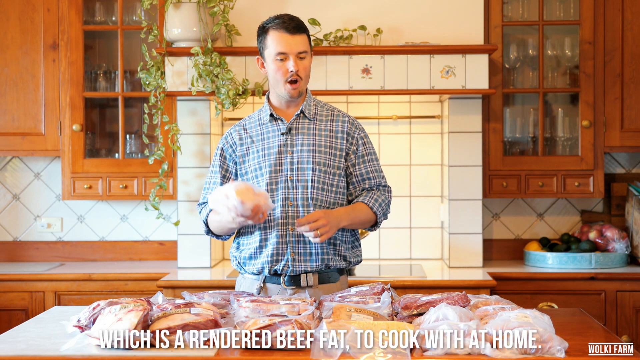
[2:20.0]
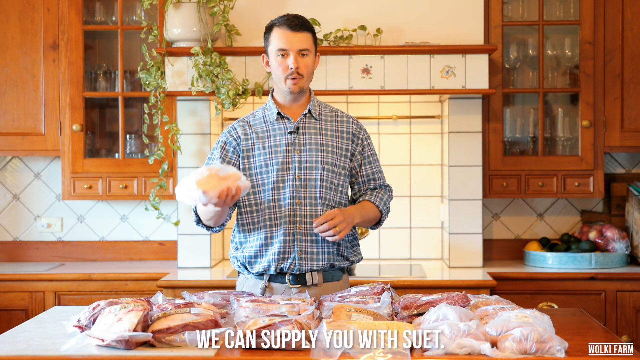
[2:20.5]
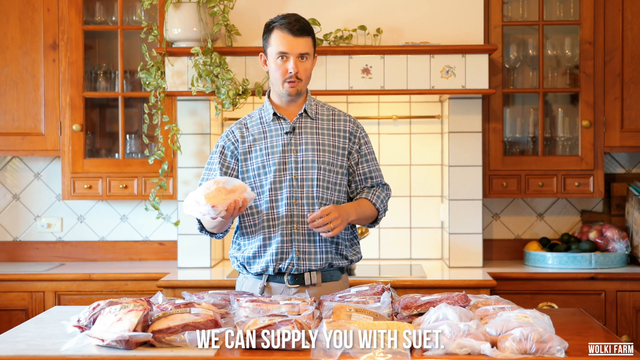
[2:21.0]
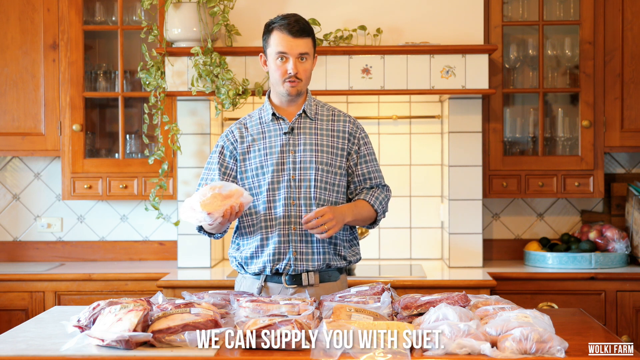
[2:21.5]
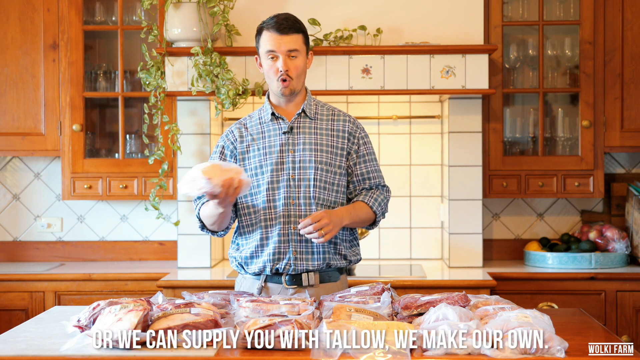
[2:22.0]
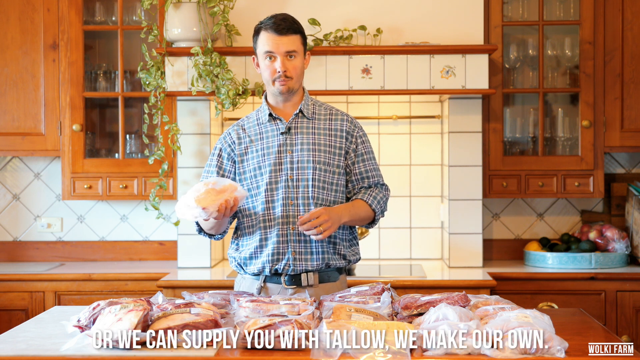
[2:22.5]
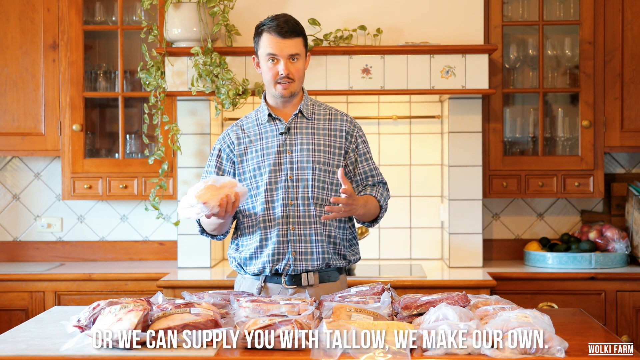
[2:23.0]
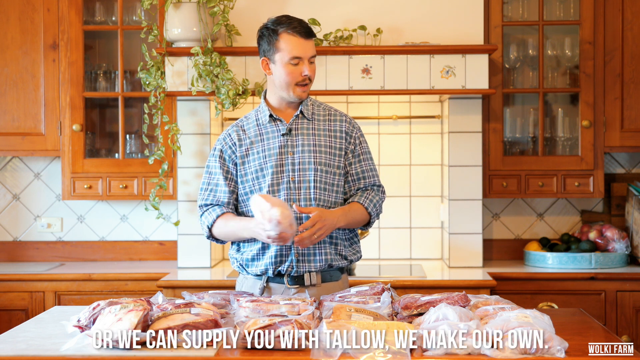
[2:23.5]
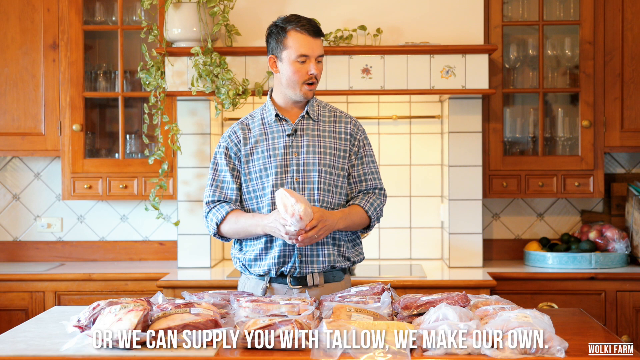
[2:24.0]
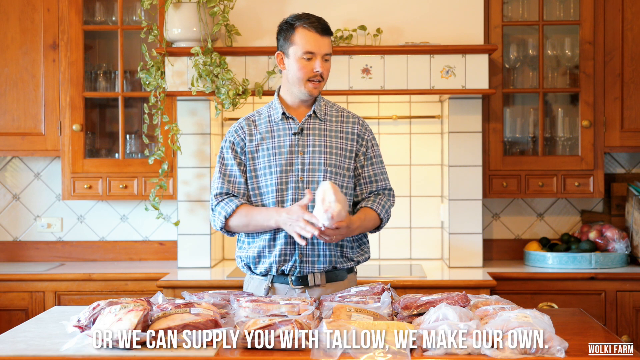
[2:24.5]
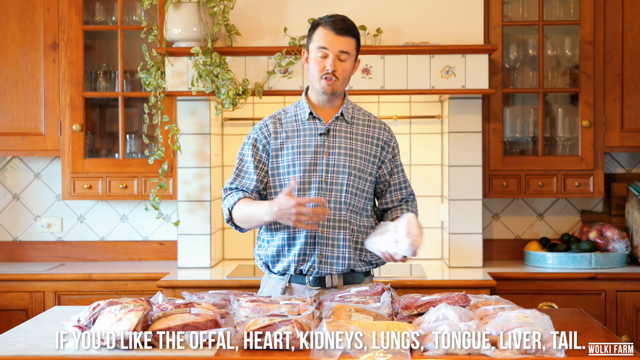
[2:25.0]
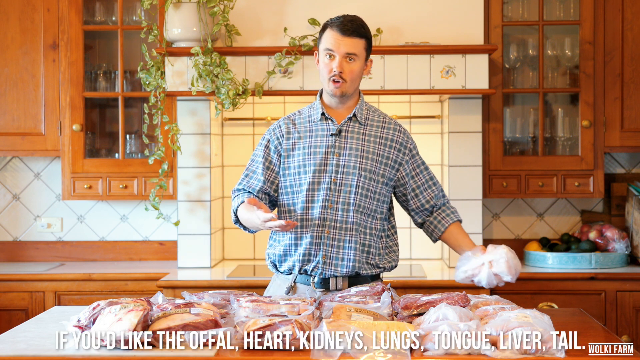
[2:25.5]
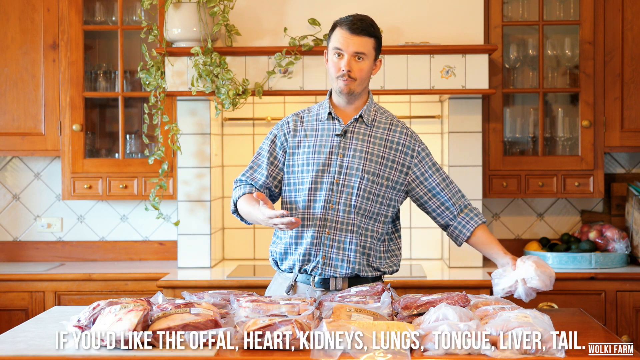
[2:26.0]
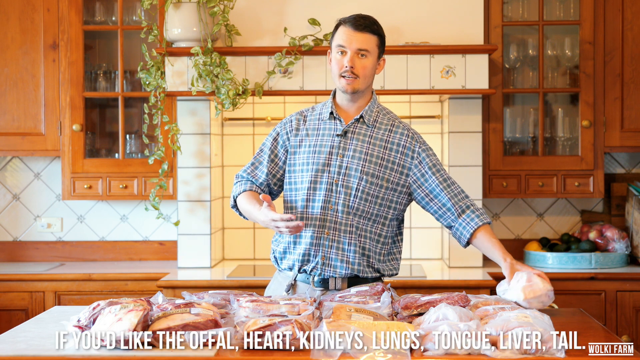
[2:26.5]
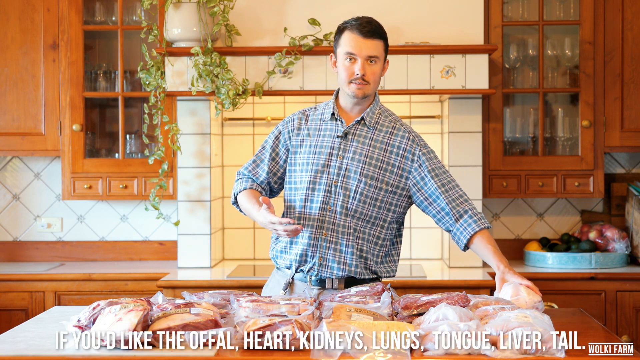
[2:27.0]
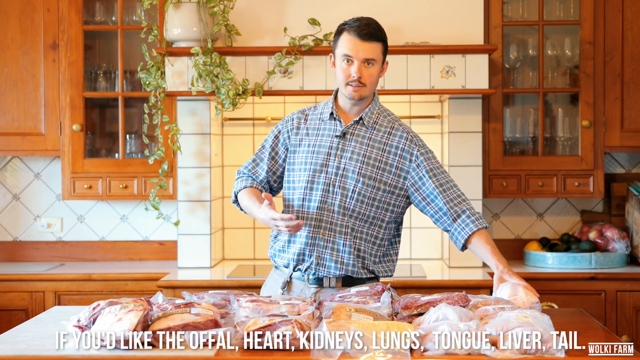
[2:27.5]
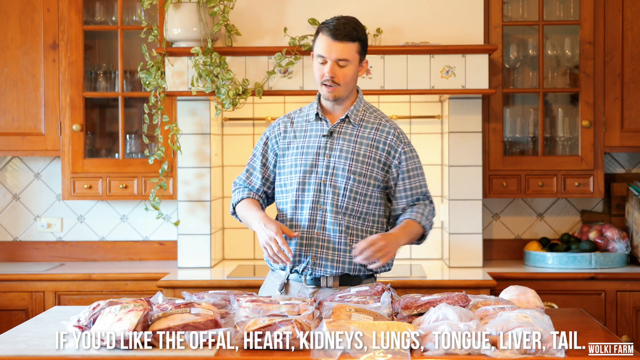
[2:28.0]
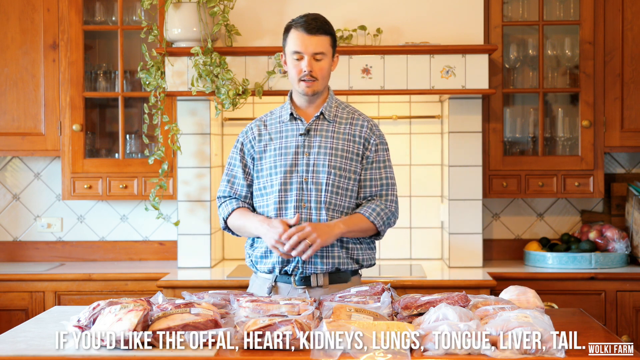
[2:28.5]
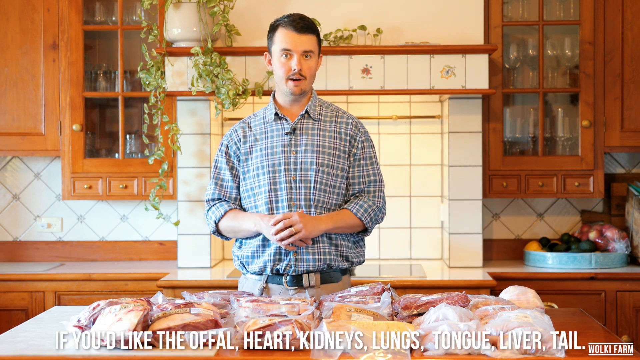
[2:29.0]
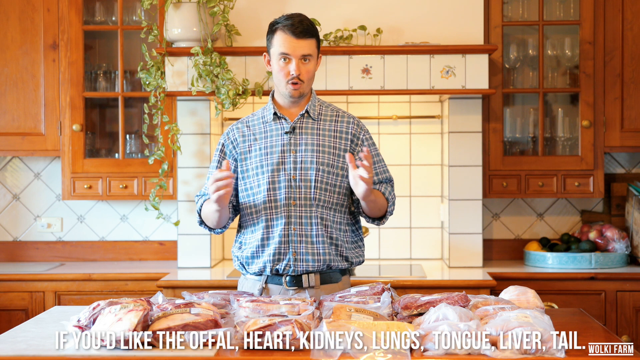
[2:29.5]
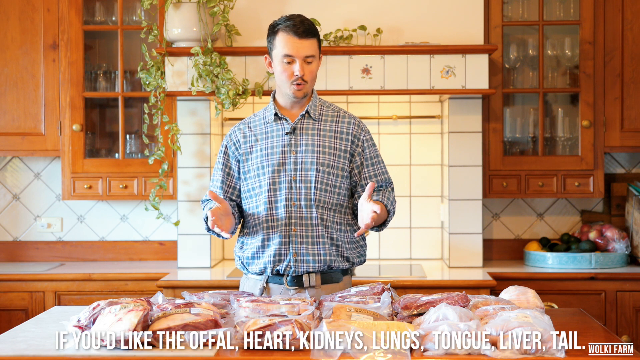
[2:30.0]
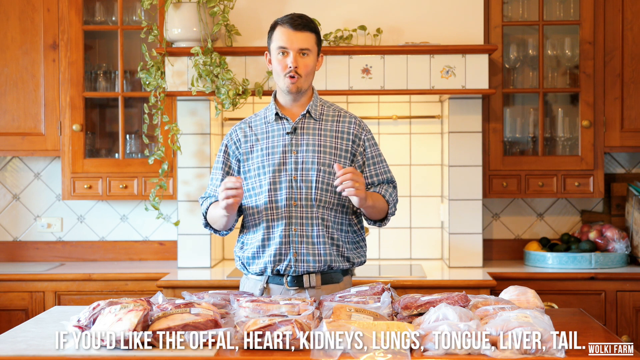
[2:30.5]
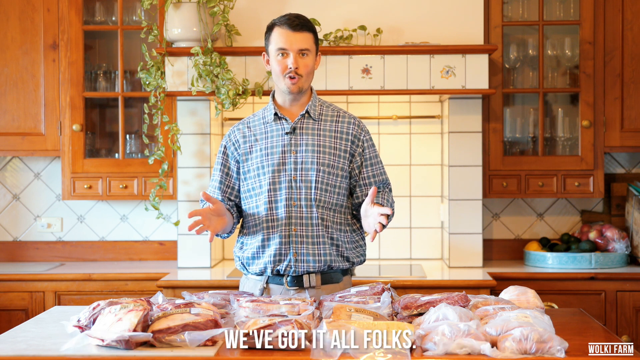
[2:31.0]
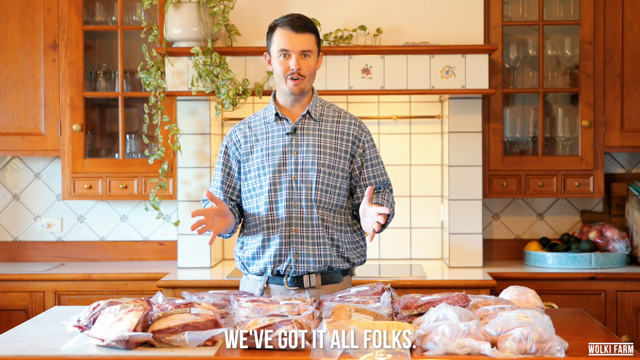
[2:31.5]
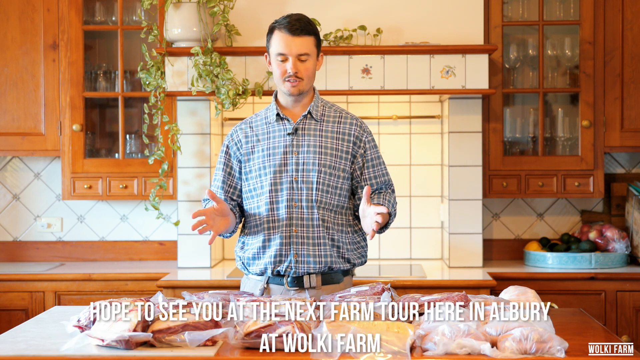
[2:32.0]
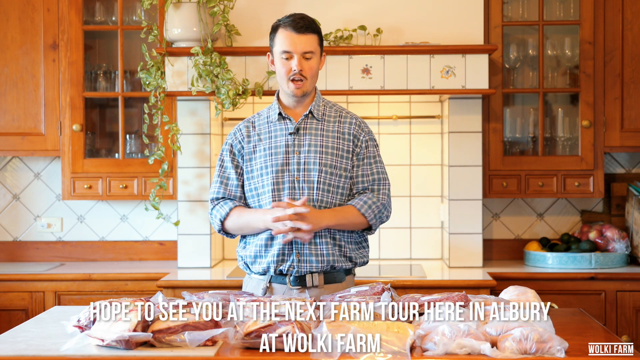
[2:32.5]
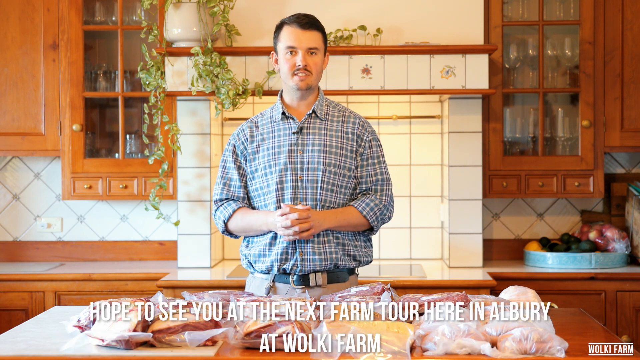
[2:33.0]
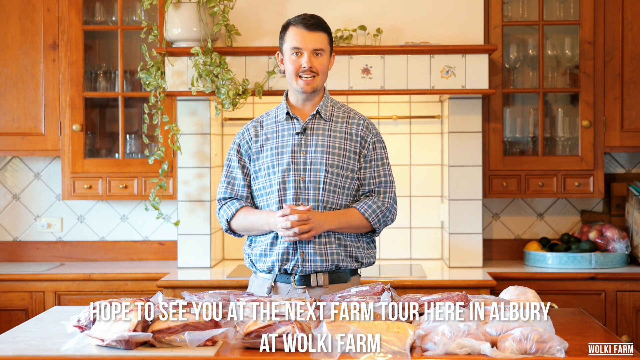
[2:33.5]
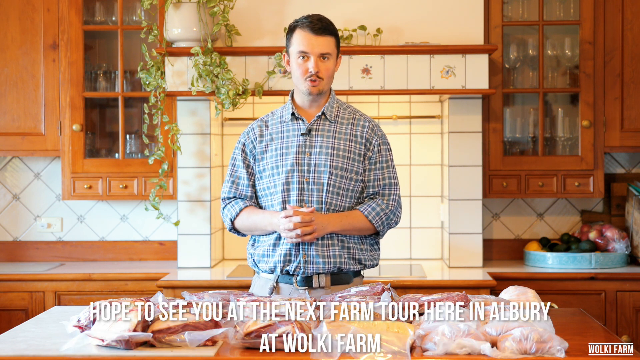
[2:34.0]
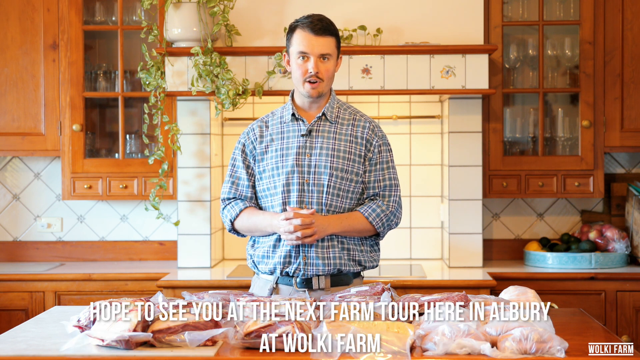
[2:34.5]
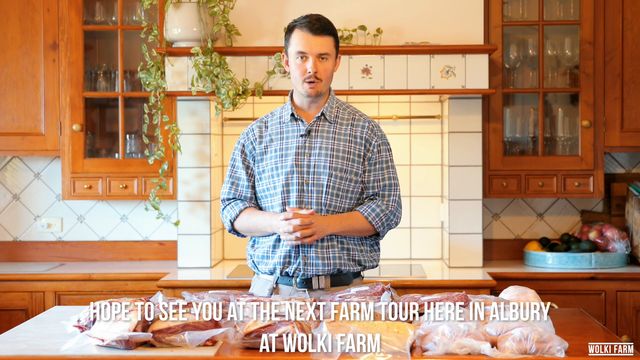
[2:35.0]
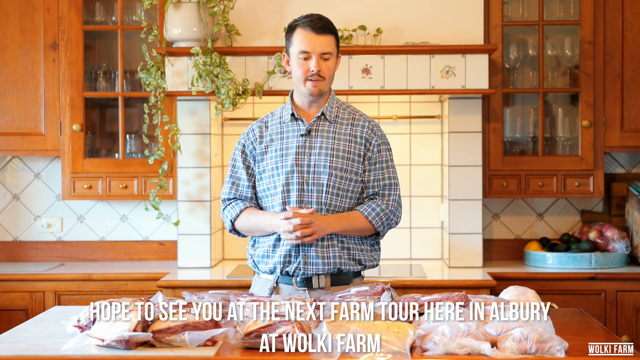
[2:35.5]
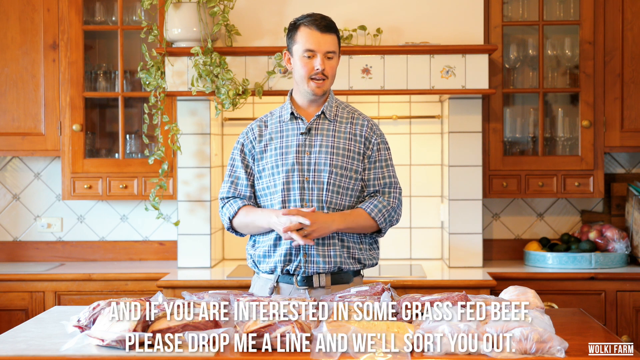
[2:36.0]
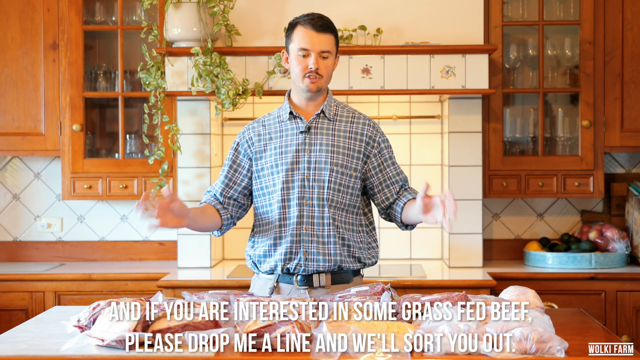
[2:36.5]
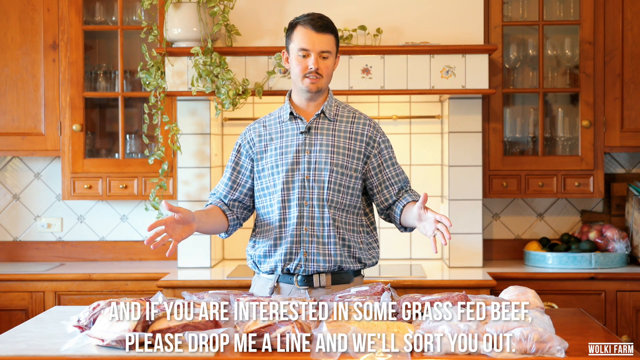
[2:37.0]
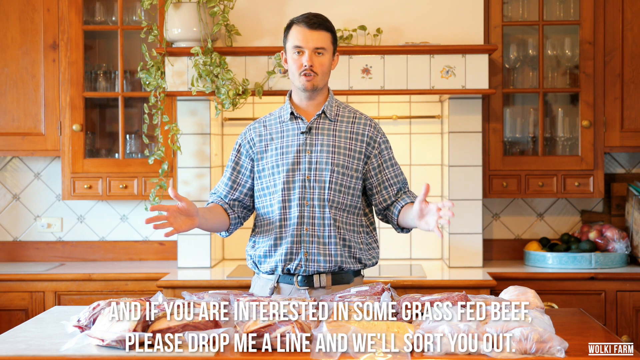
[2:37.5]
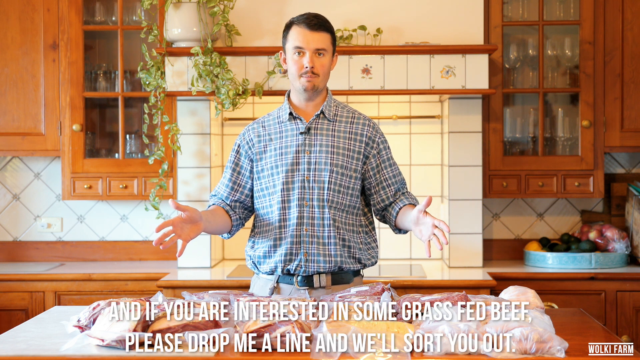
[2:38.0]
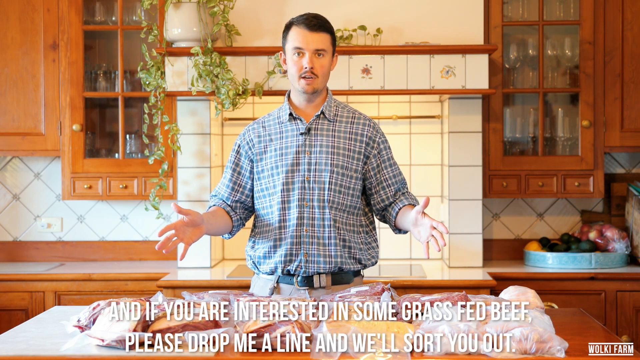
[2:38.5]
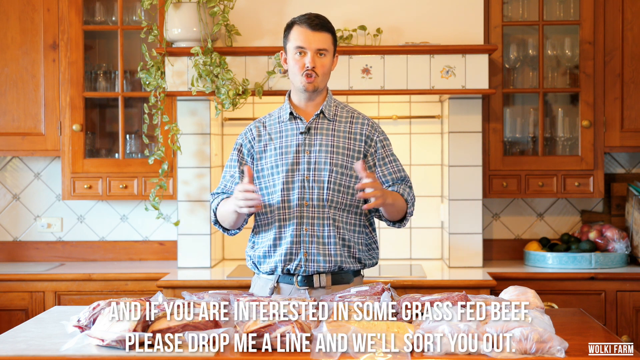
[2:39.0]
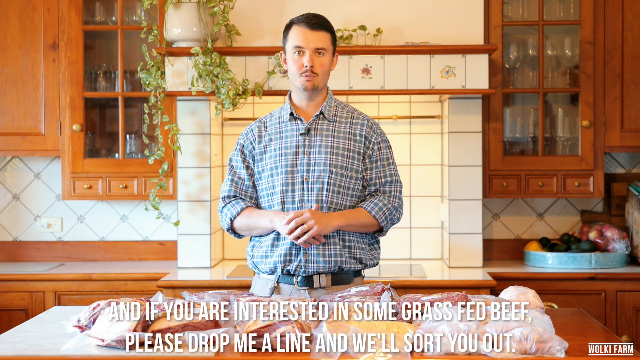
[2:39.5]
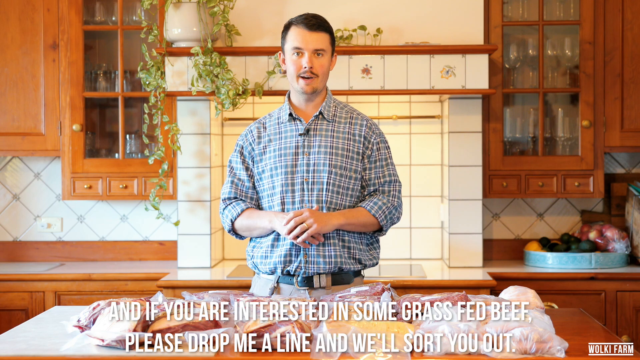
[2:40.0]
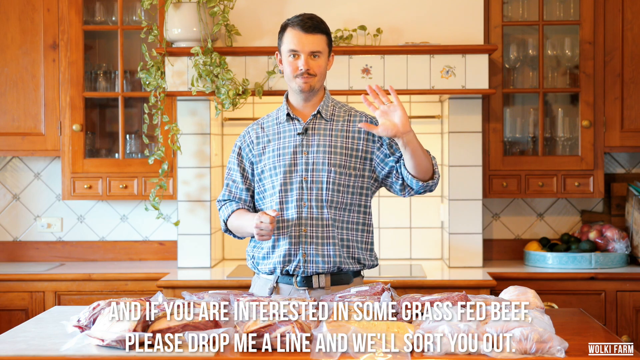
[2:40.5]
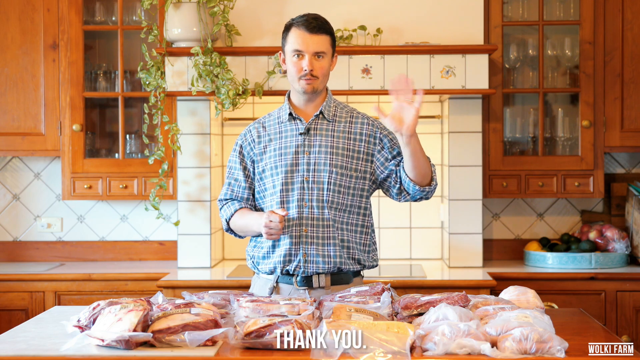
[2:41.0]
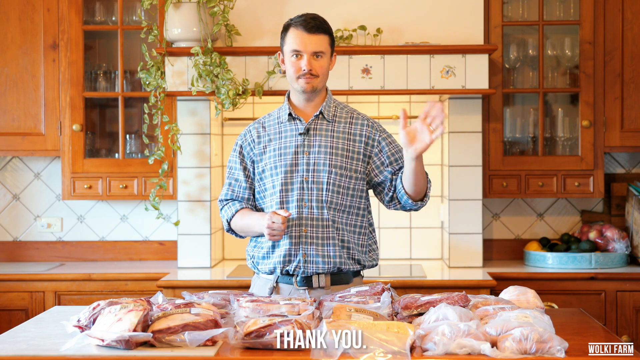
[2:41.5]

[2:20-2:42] Jacob holds the bag of sausages in his right hand and pats it a bit with his left. The caption reads "we can supply you with suet or we can supply you with tallow. we make our own. If you'd like the Offal Heart, Kidneys, Lungs, Tongue, Liver, Tail We've got it all folks. Hope to see you at the next farm tour here in Albury at Walkie Farm and if you're interested in some grass-fed beef please drop me a". Having put the sausages down, he waves at the camera with his left hand. Jacob is probably in his early 40s, maybe a little younger. He wears a wedding ring, a blue tartan shirt, a black belt and stone-coloured trousers. He has a thin moustache and a bit of stubble on his chin but is otherwise mostly clean shaven.